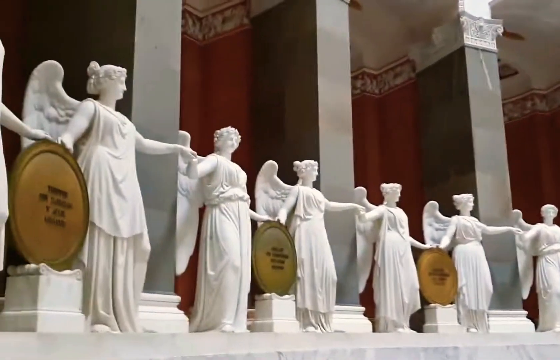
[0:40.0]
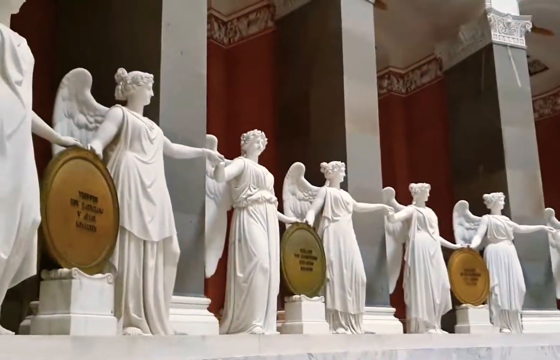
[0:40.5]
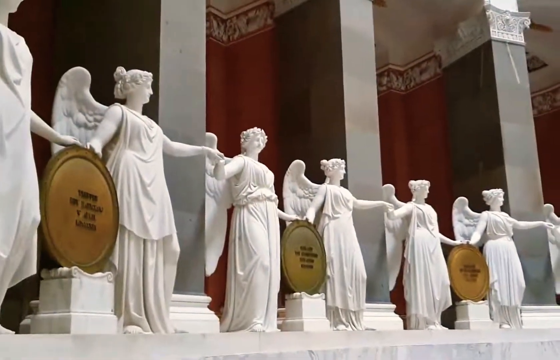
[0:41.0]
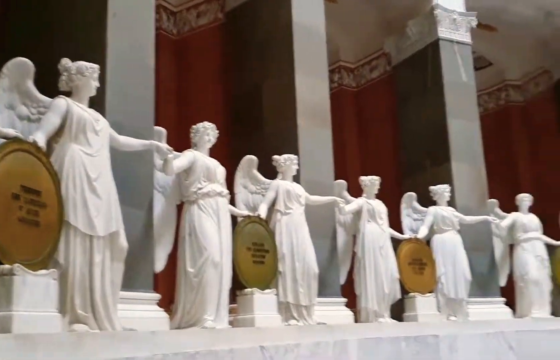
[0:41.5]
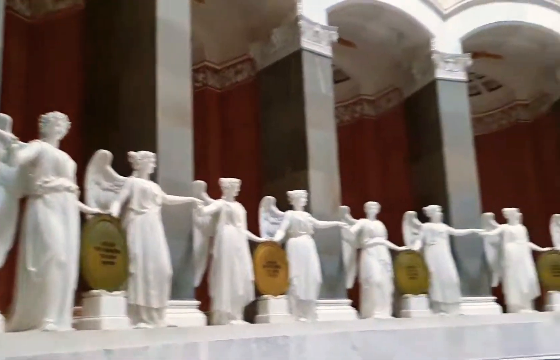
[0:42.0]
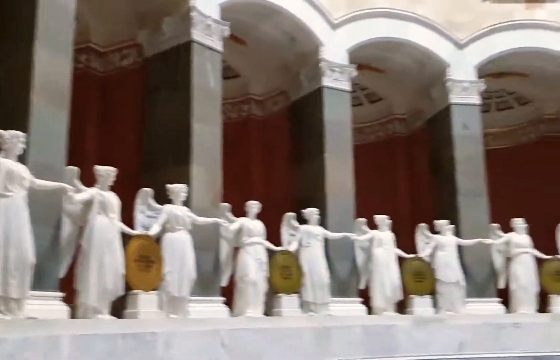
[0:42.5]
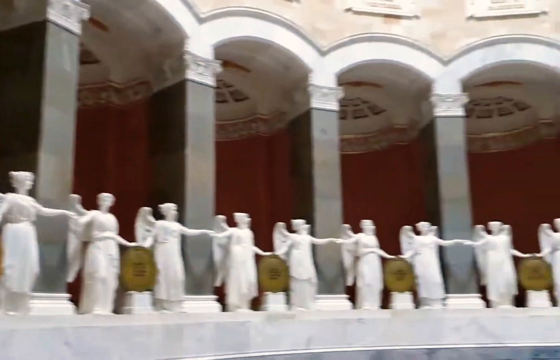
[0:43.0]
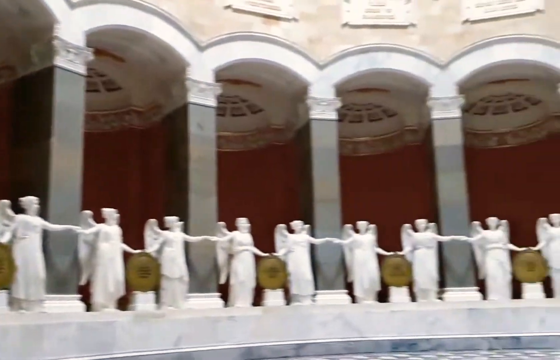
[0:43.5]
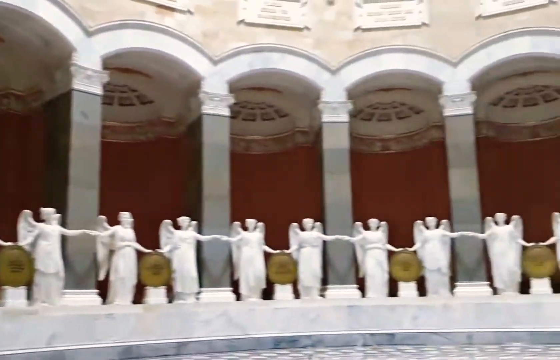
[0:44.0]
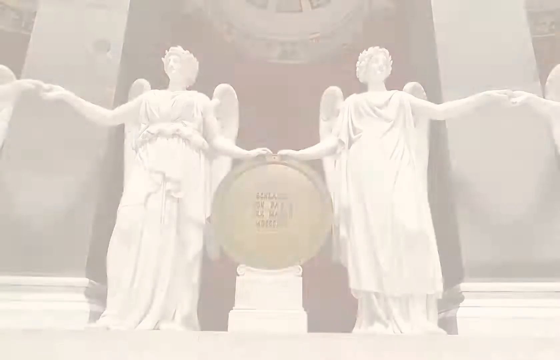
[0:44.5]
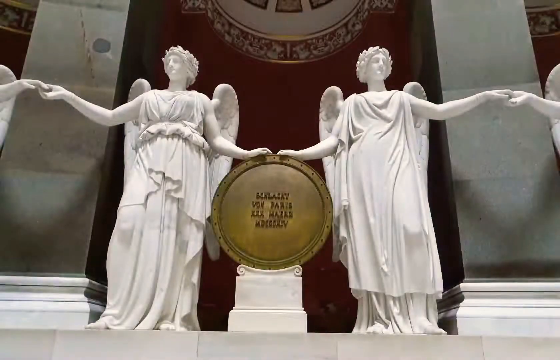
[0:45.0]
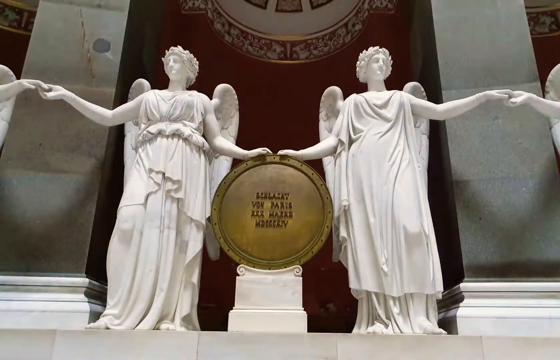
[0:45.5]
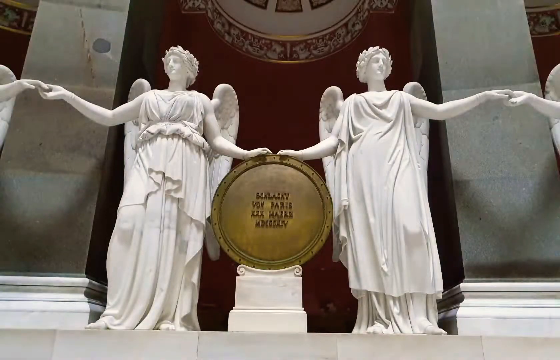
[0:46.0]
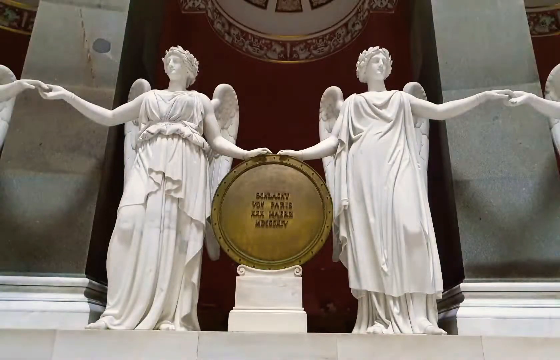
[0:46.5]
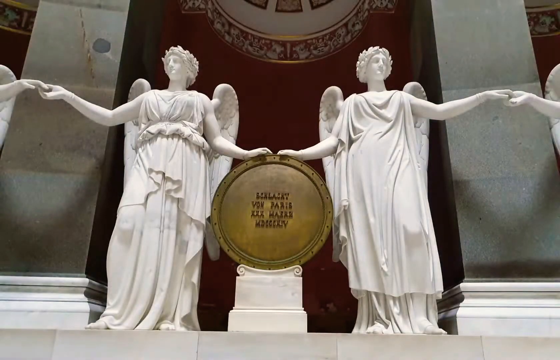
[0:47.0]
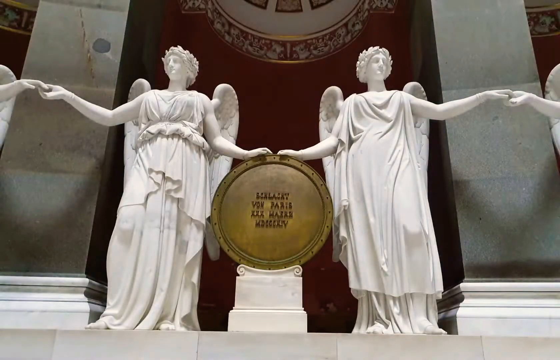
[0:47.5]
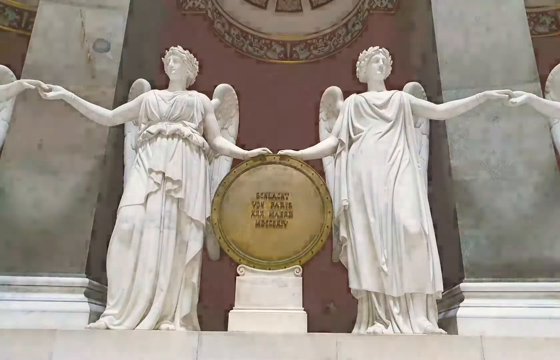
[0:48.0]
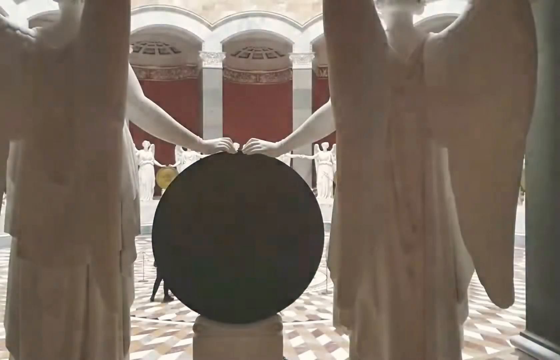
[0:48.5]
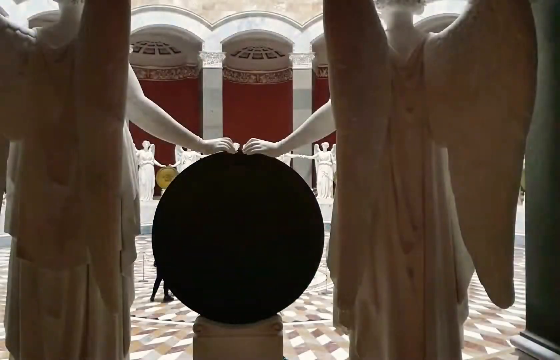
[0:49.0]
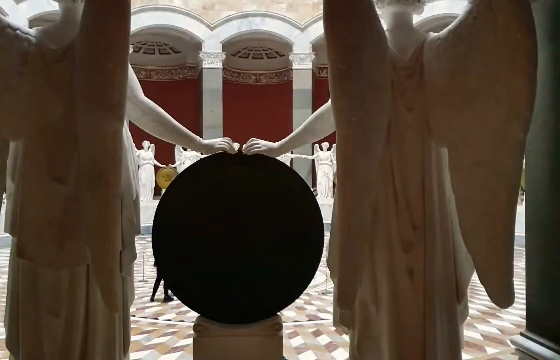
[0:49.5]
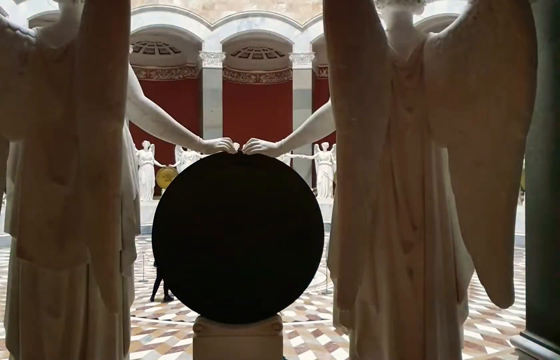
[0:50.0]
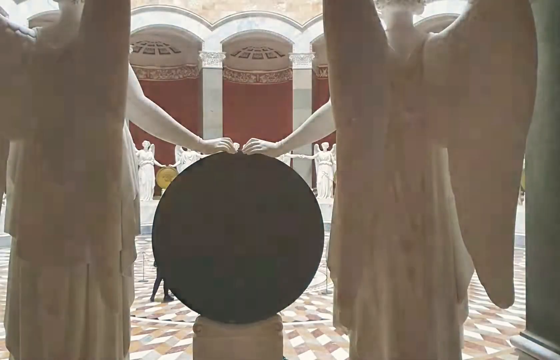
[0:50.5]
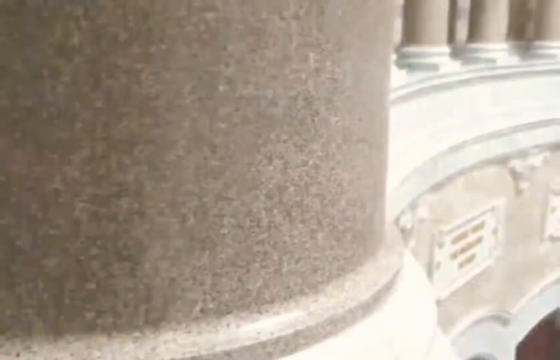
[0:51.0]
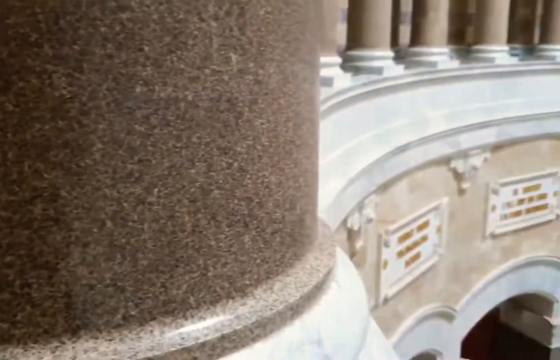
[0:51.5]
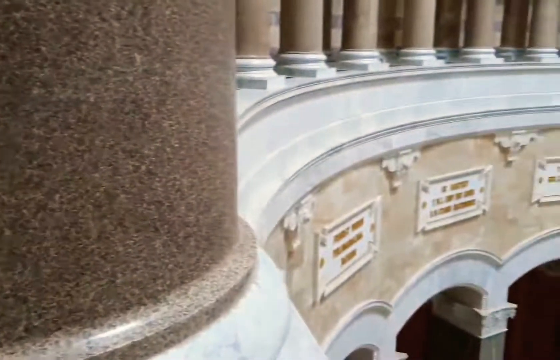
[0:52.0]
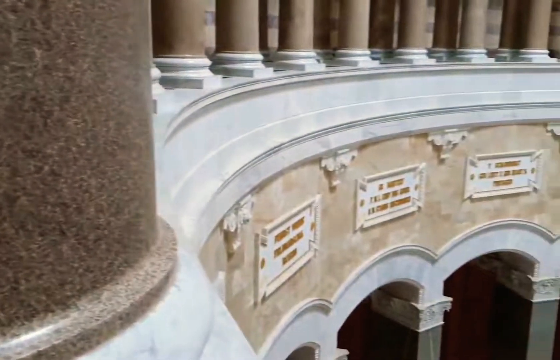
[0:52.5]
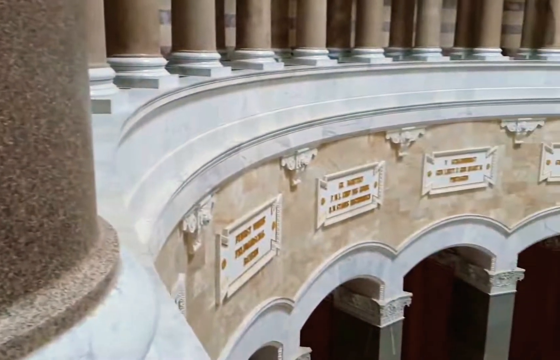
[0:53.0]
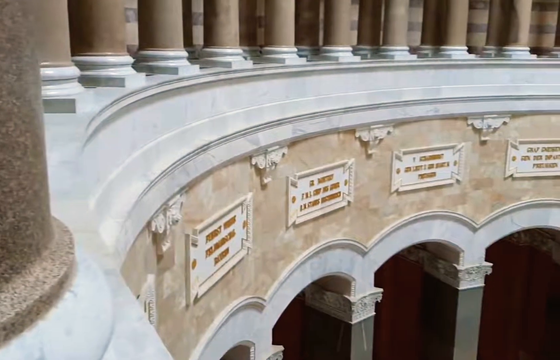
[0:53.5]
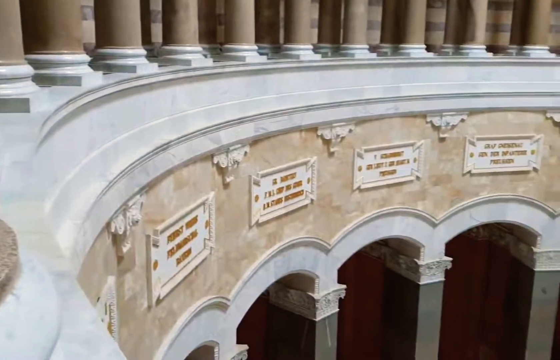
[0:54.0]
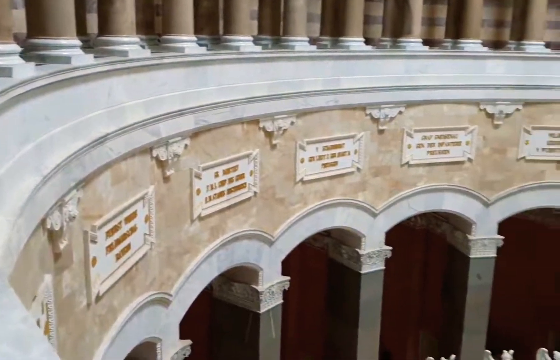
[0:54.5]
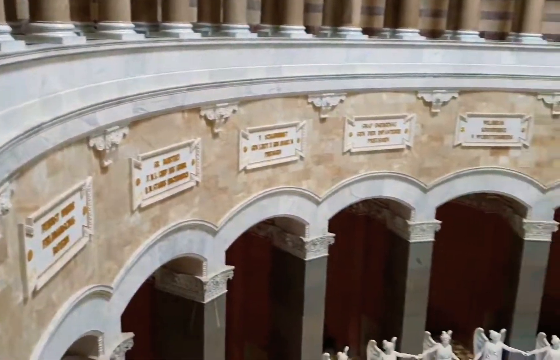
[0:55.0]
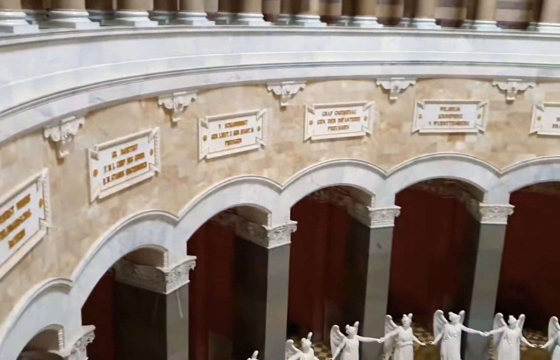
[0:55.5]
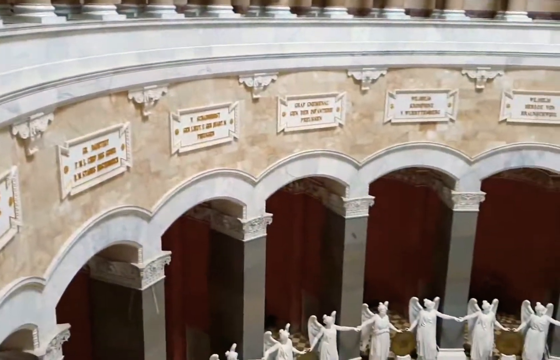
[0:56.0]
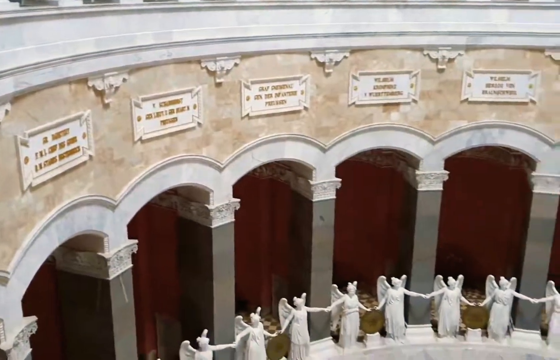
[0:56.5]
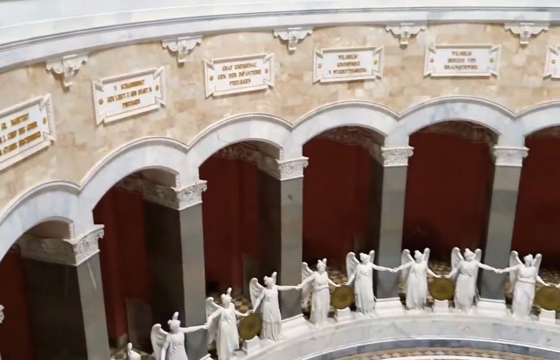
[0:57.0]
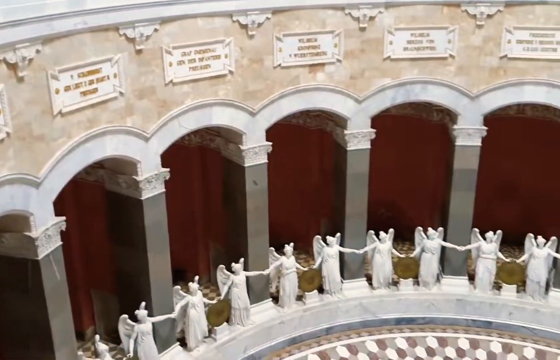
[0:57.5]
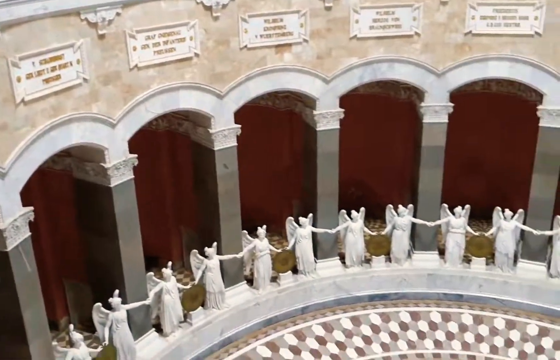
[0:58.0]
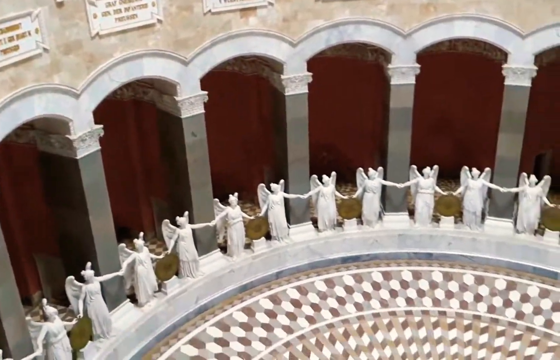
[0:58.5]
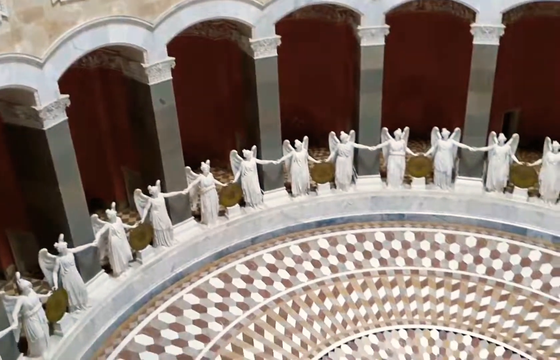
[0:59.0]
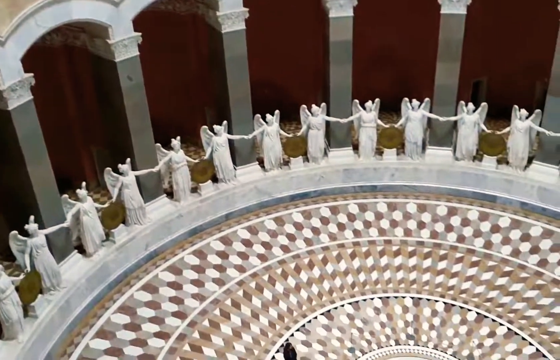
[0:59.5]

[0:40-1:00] Inside the dome, the focus is on the angels, then on their shields, then on the different plaques that have writing on them, before the view becomes more of an aerial one looking down on a tiled floor. The angels look like white porcelain angel statues, all standing and holding hands, with a large gold medallion between them that also has writing on it. The camera pans close by the angels, showing that they go completely around the area, standing on a multicolored tiled floor. From the aerial view, the tile briefly shows designs in circular patterns going around it, very ornate. In the little alcoves between the pillars behind the porcelain angels, there looks to be a kind of red or burgundy wall covering, with more floral-type patterns as a trim on the top.